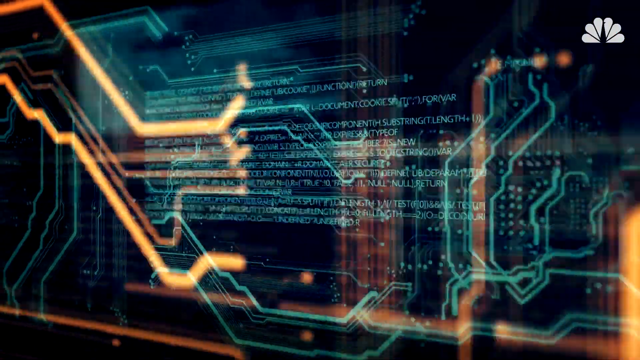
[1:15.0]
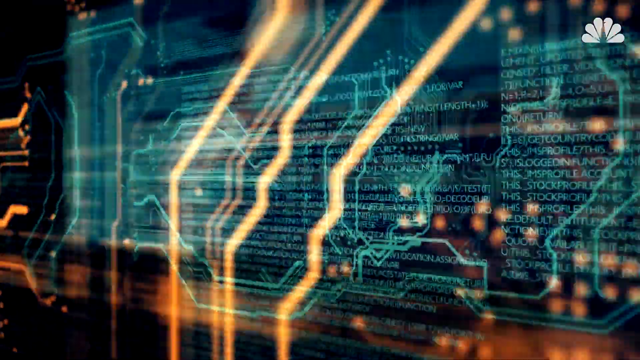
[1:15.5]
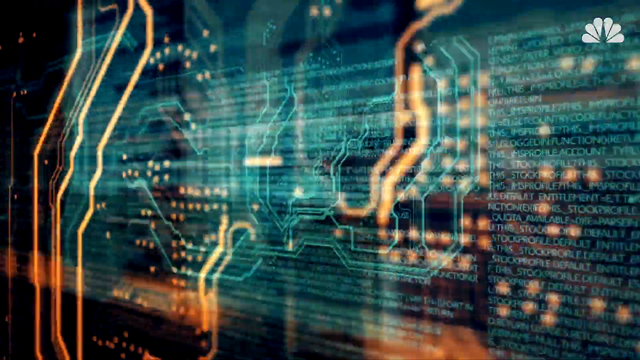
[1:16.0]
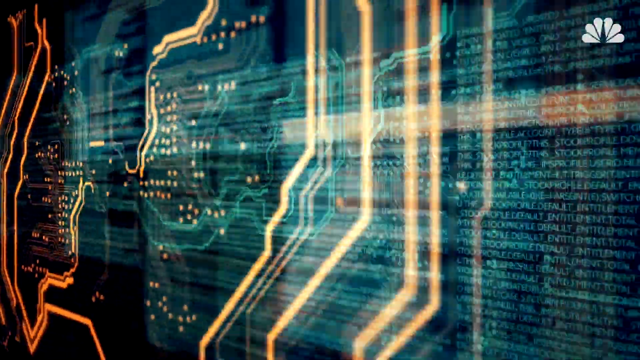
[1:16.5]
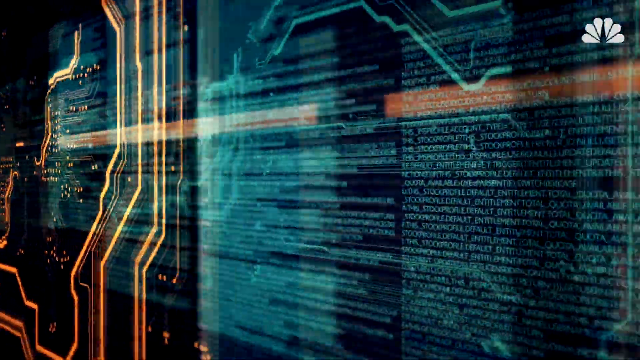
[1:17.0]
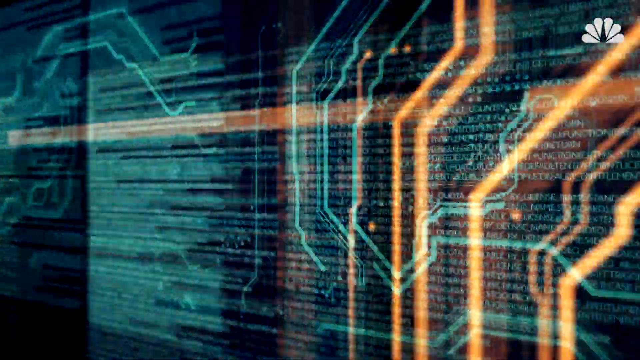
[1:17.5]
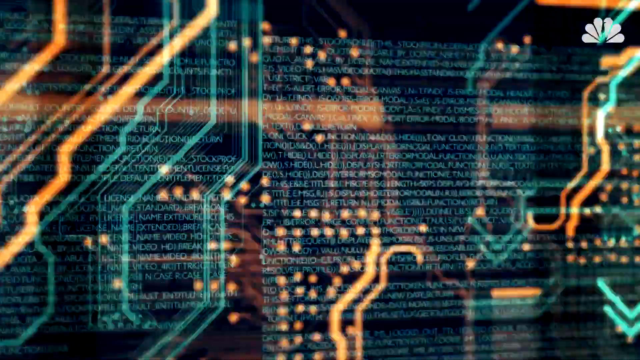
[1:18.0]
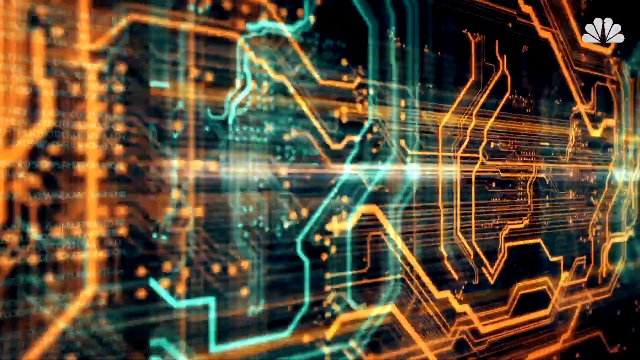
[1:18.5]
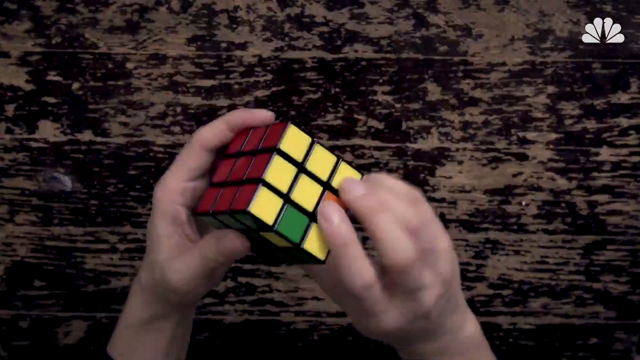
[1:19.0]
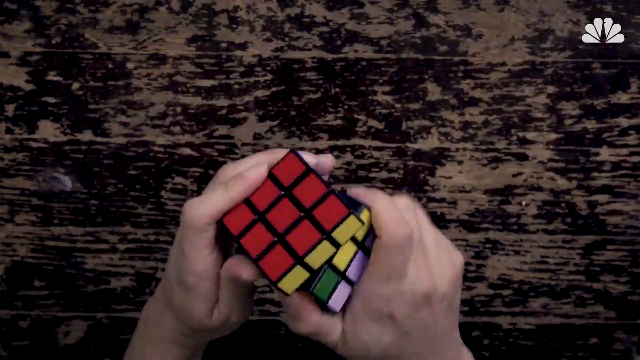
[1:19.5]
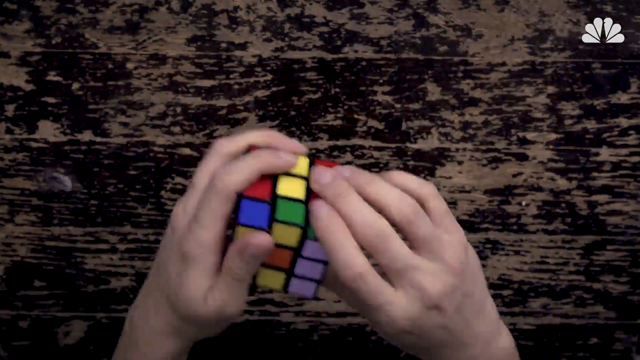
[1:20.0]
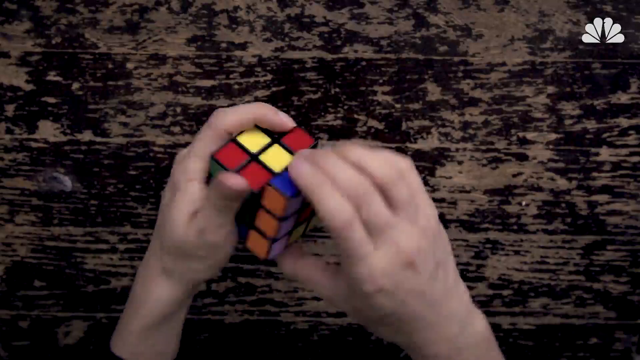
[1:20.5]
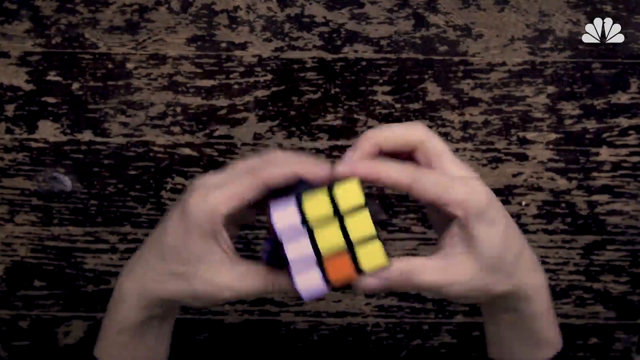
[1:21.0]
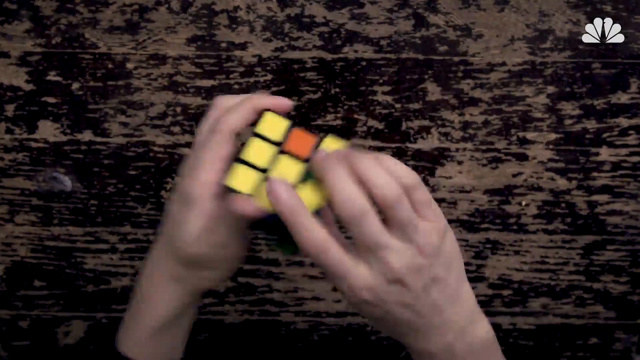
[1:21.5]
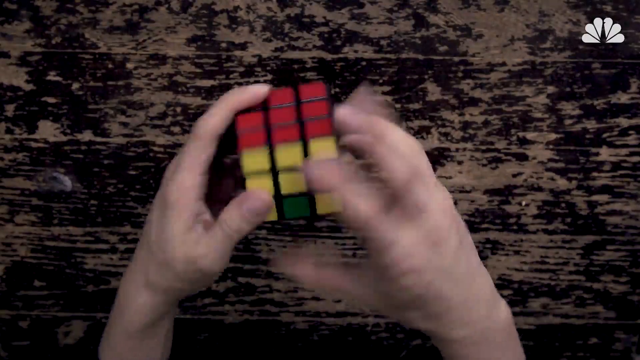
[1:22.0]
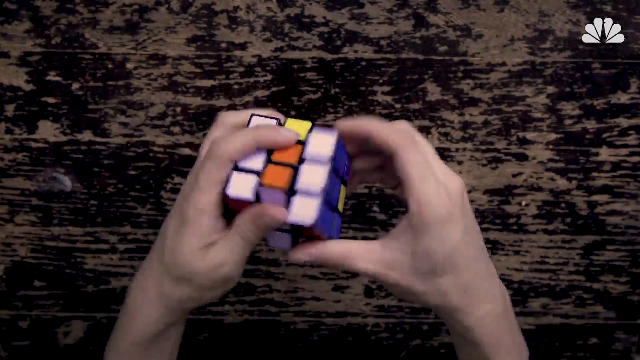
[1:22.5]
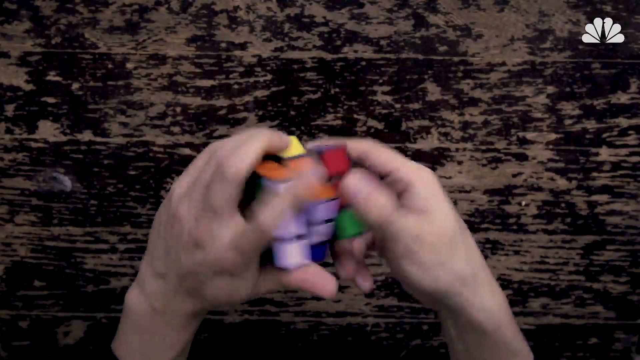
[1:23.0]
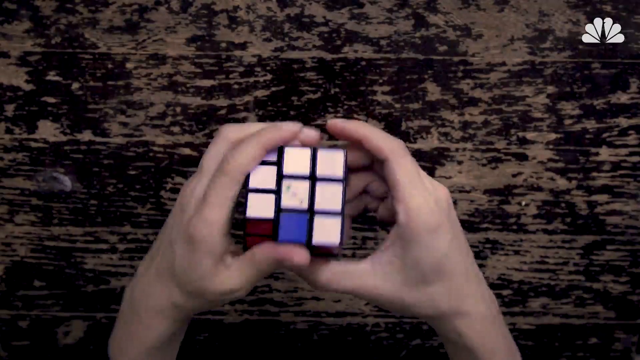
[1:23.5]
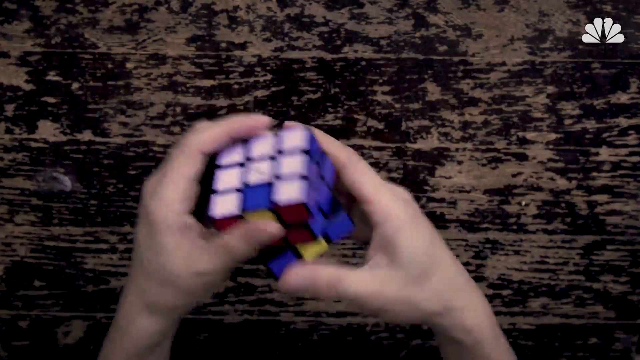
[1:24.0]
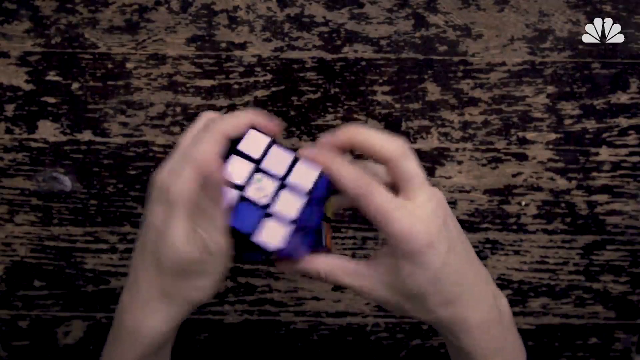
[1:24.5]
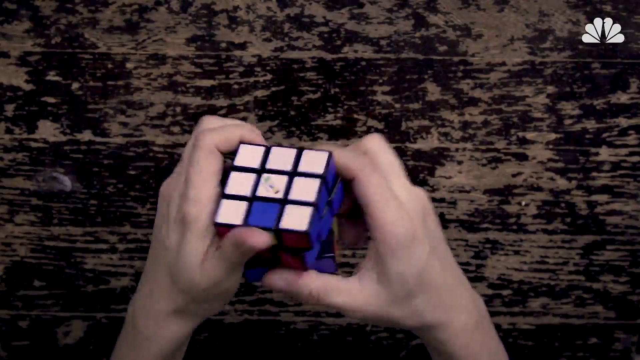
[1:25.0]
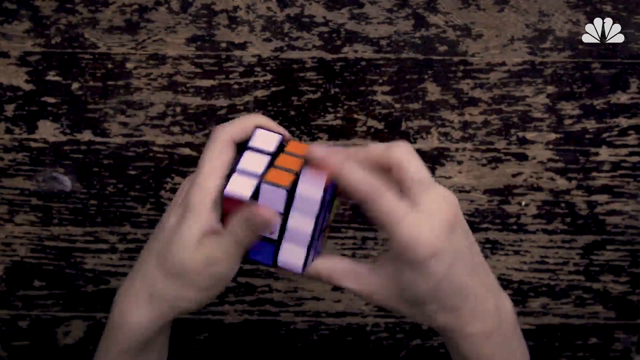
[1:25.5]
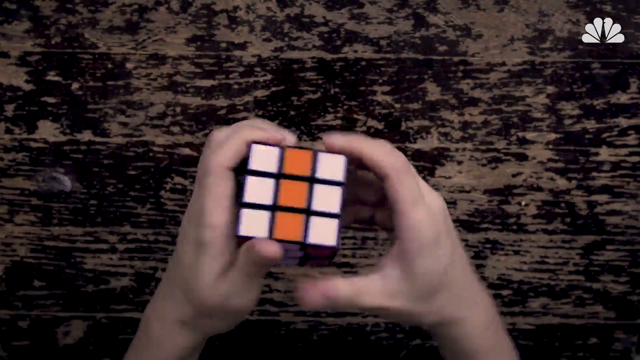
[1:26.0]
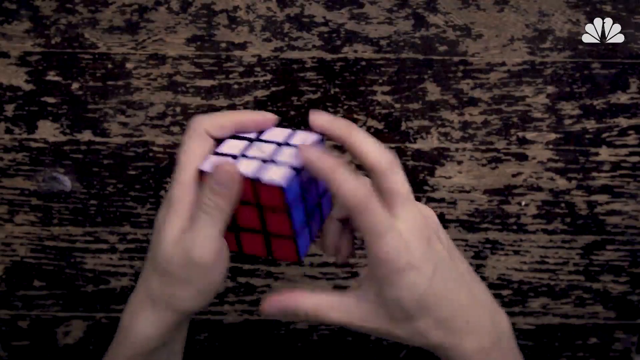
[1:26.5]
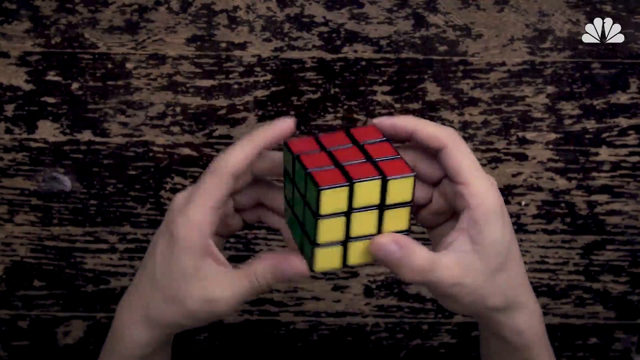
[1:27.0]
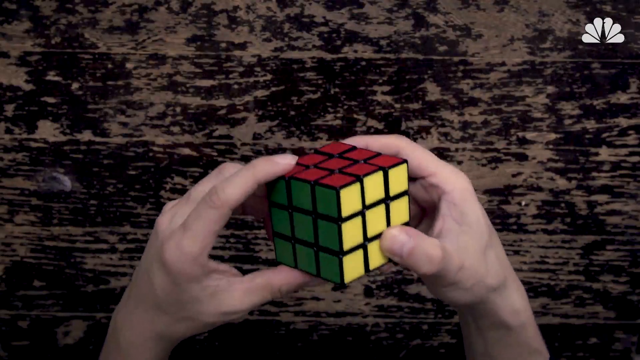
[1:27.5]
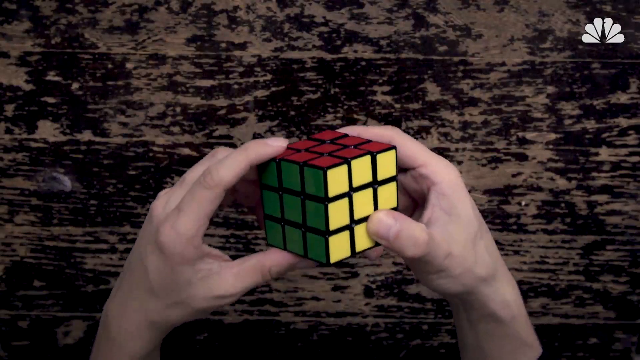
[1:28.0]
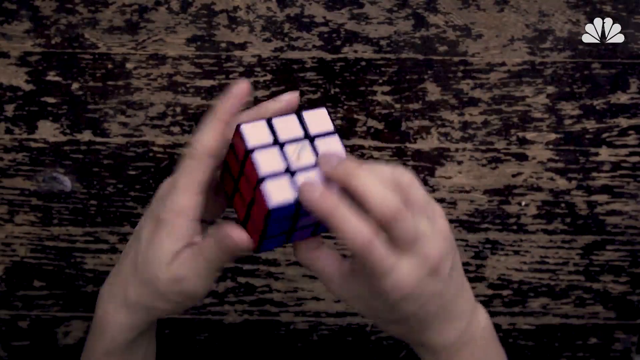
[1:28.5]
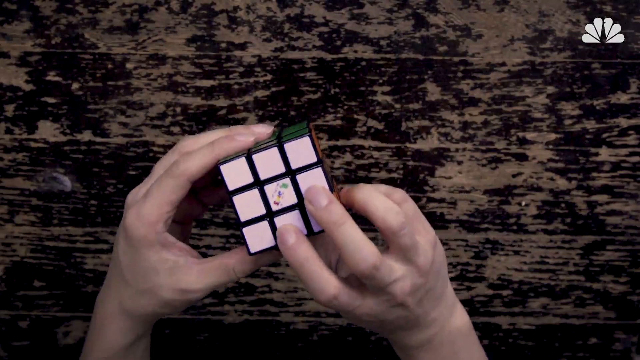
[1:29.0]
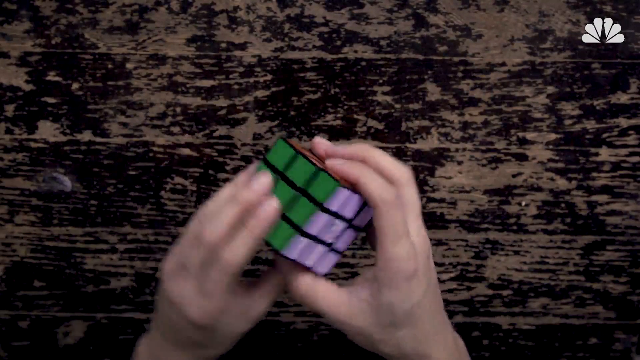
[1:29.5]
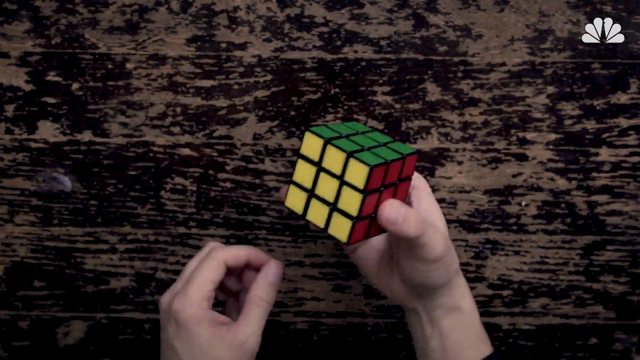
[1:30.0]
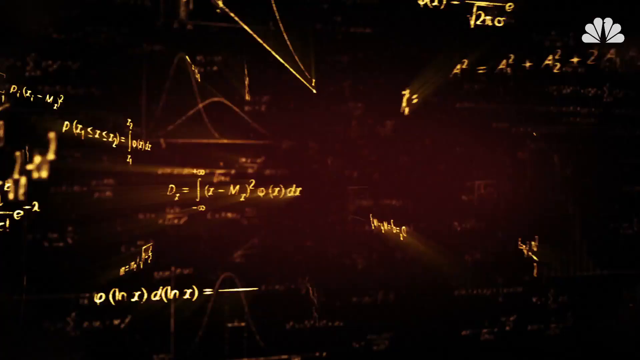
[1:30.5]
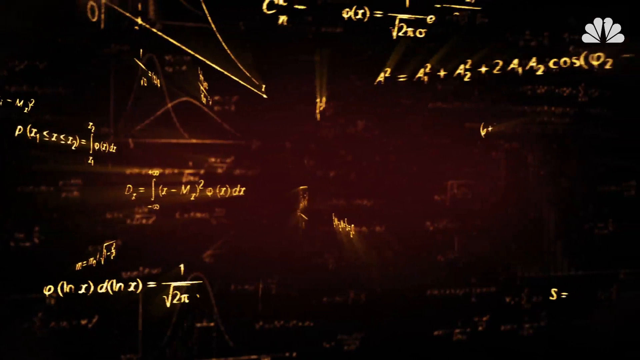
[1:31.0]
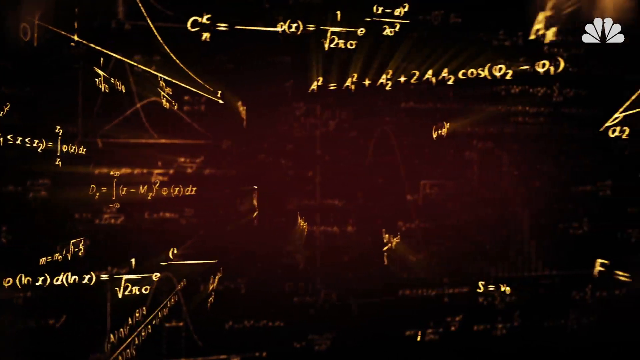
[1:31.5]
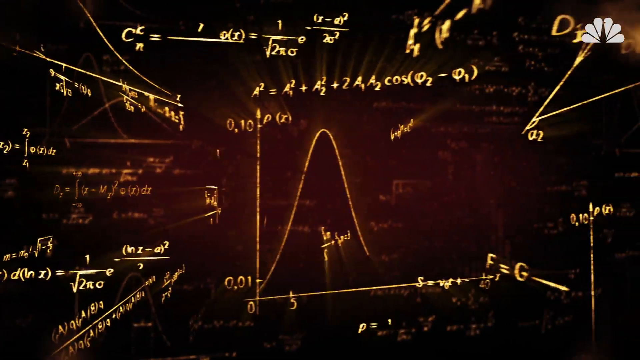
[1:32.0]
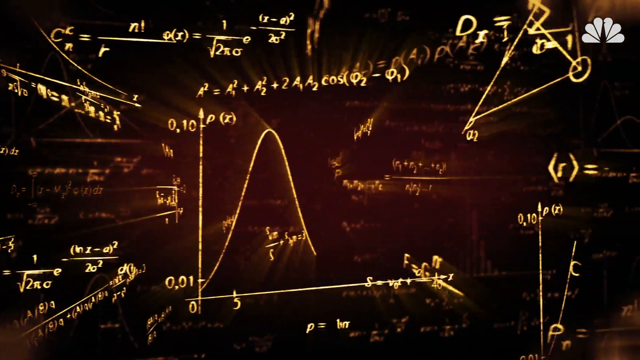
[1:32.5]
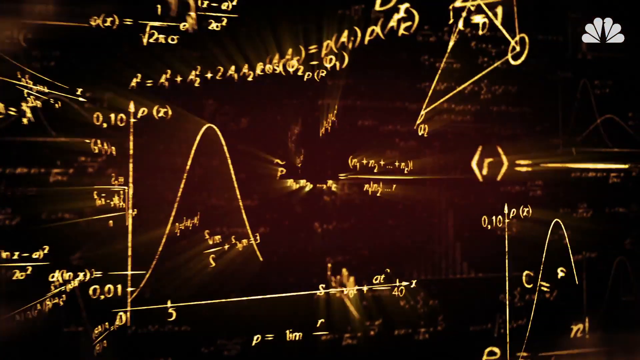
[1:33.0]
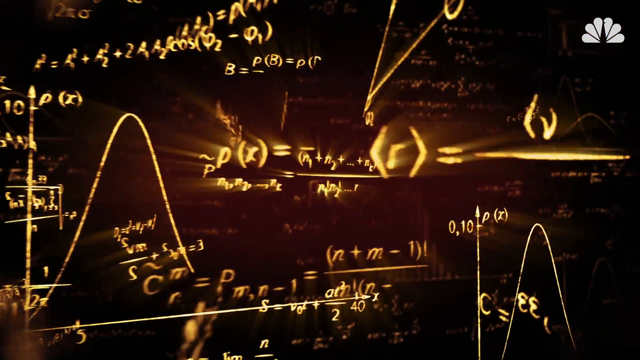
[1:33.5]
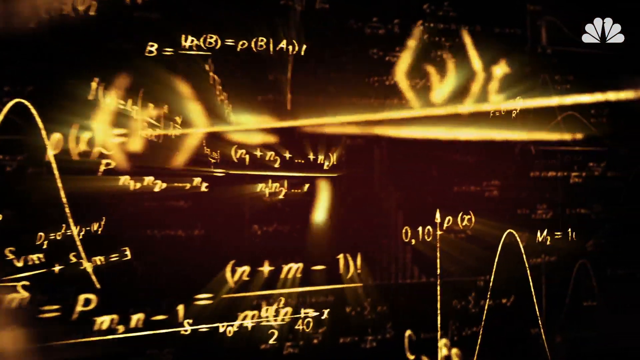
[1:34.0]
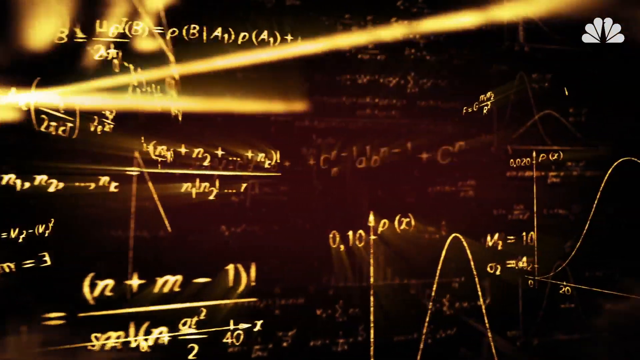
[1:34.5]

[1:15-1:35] A very fast-moving graphic shows a black background with lots of neon blue, kind of turquoise, text, with orange text over the top, in a 3D look. The view zooms over the top, going down one angle and then from the other, panning one way and then the other. The text is so bright it almost looks illuminated against the dark background, as if it is being written, and there are many lines, almost like electrical wires. The video then cuts to a very fast-moving set of hands with a traditional primary-colored Rubik's Cube in front of a very old, dark brown wood table that looks kind of chipped. He quickly goes from the solid colors, the cube jumbles up, and he solves it again so that each side is one color.